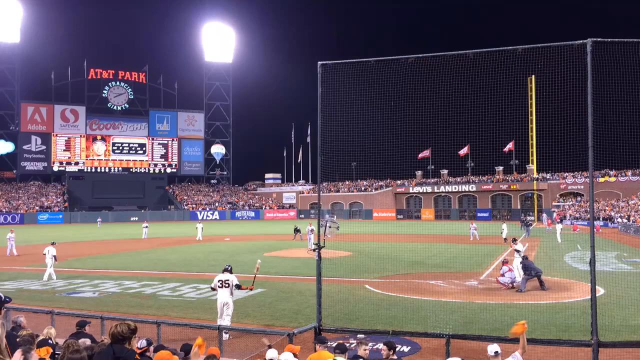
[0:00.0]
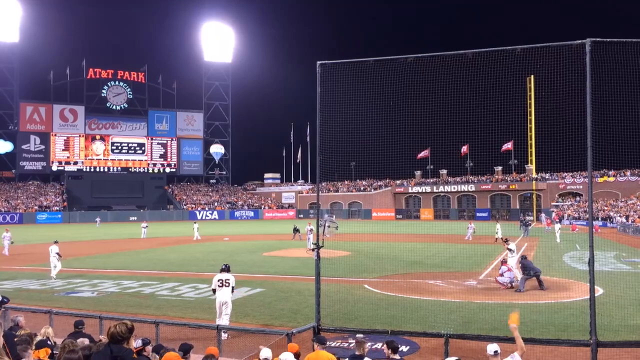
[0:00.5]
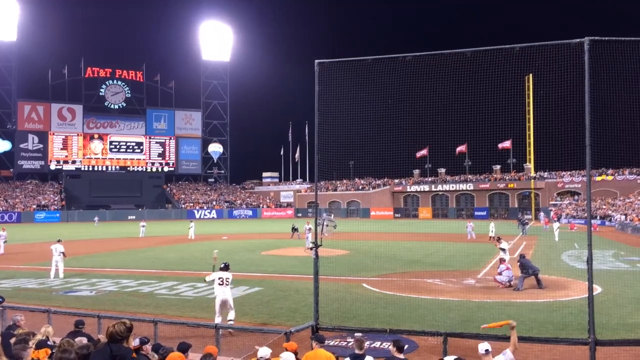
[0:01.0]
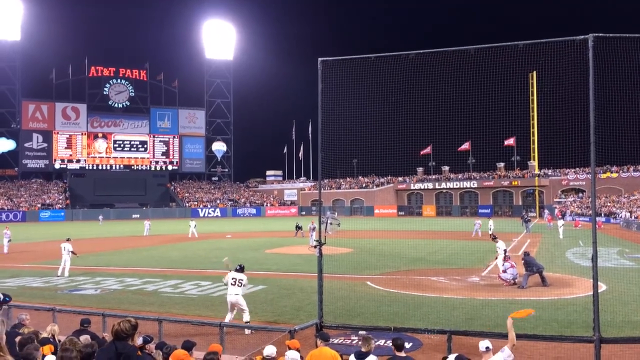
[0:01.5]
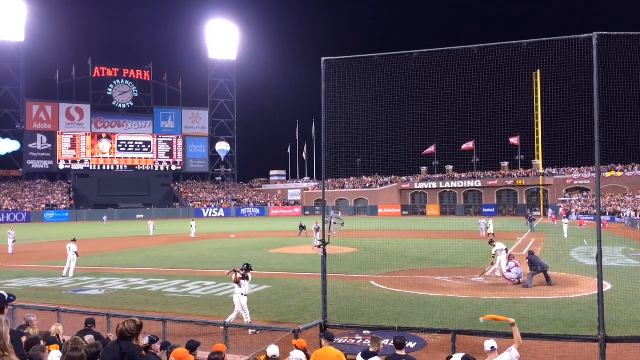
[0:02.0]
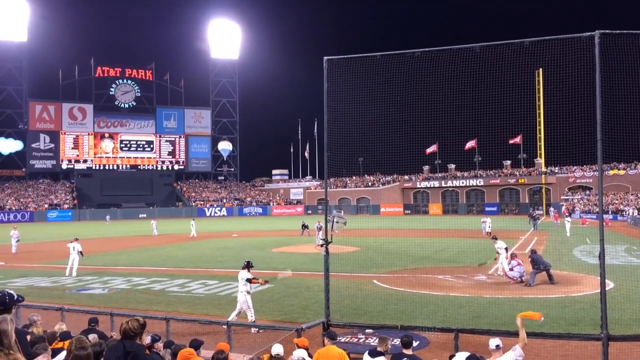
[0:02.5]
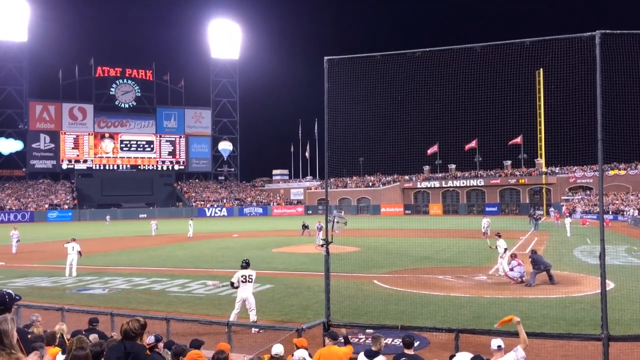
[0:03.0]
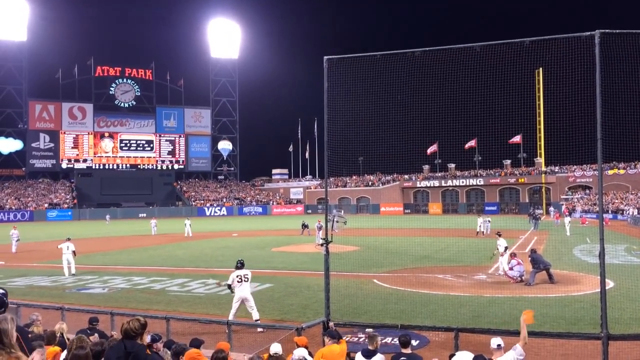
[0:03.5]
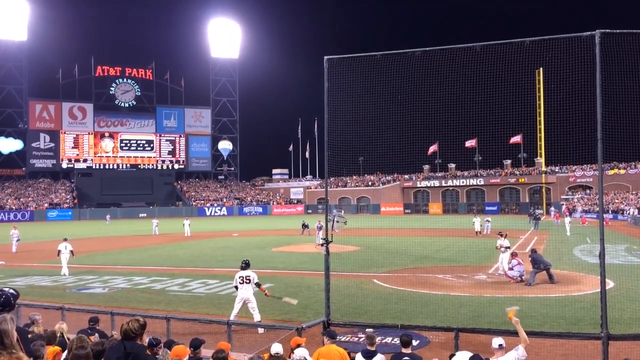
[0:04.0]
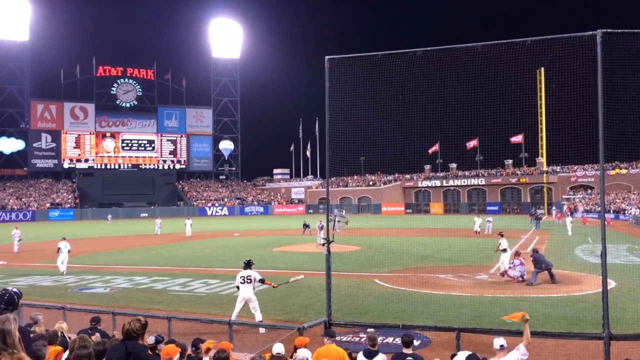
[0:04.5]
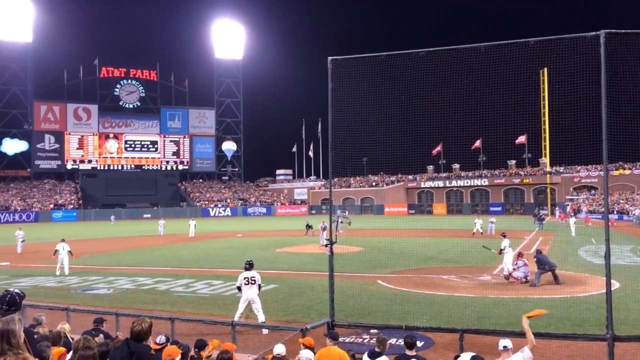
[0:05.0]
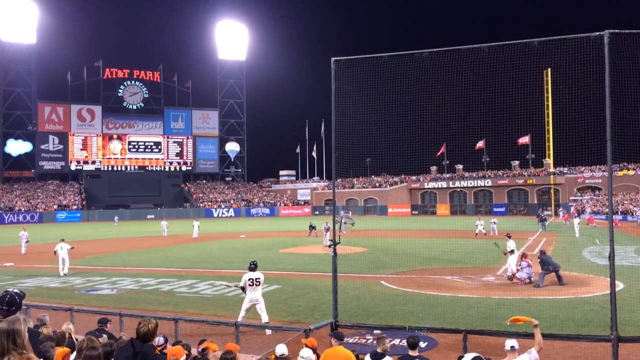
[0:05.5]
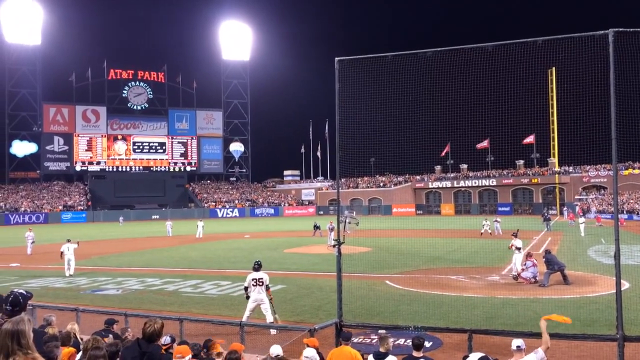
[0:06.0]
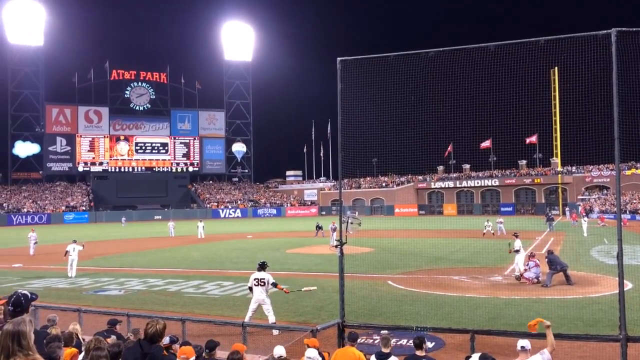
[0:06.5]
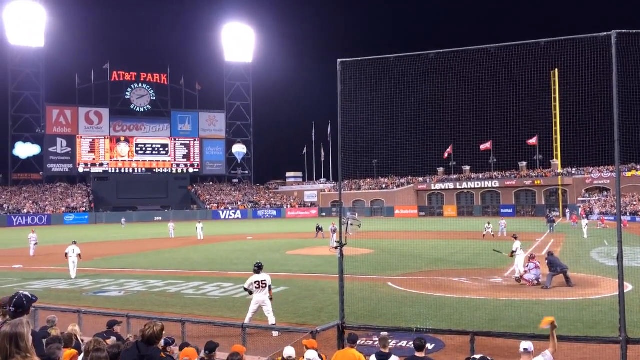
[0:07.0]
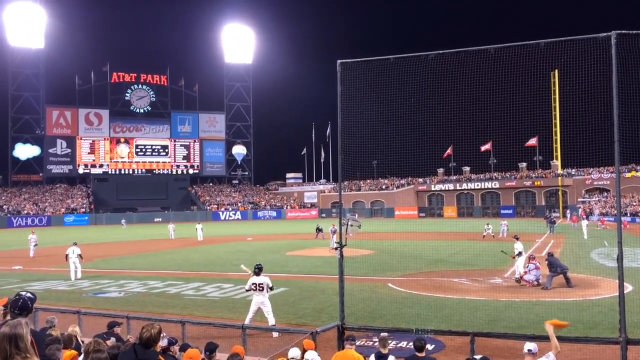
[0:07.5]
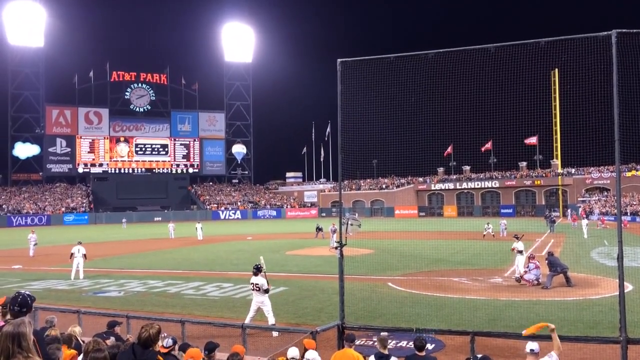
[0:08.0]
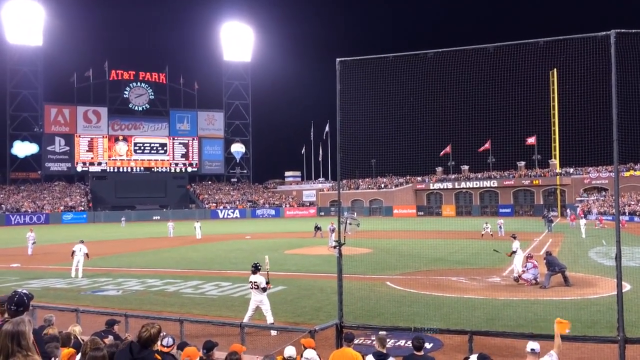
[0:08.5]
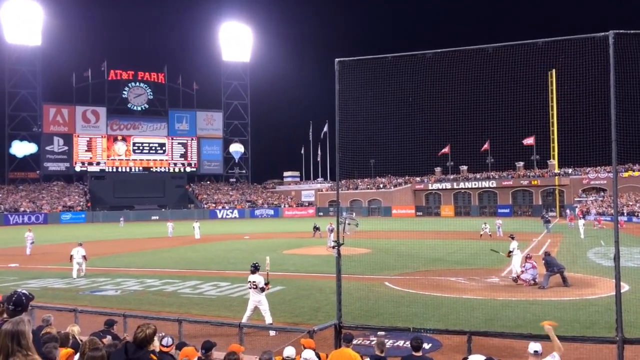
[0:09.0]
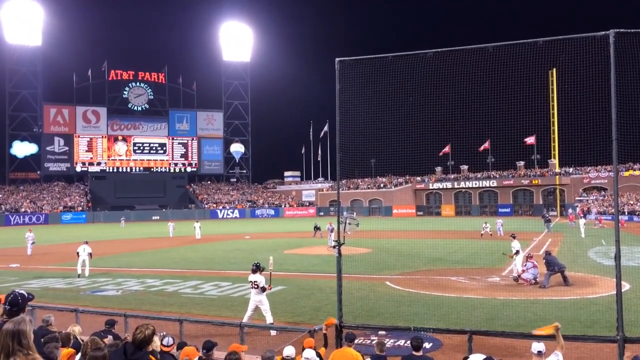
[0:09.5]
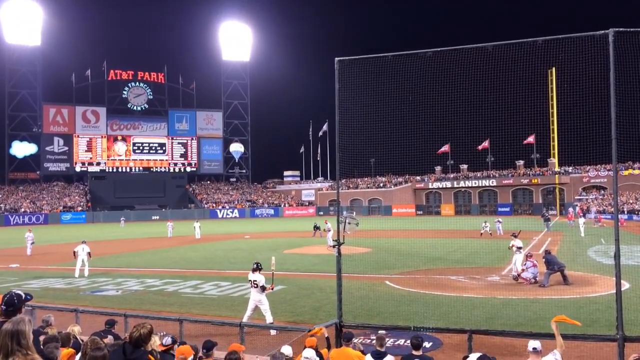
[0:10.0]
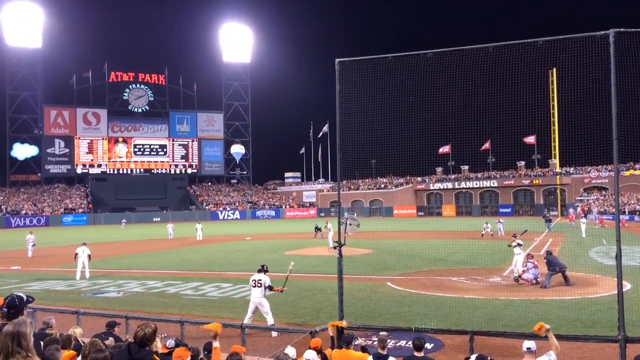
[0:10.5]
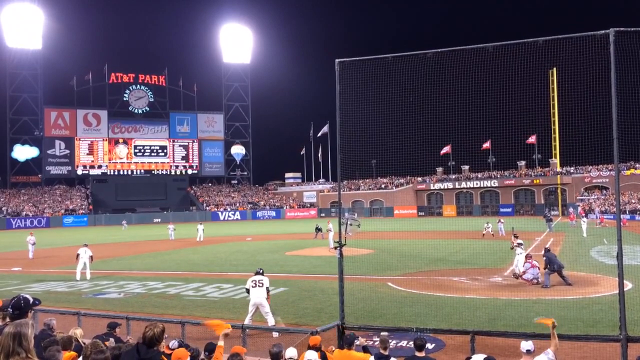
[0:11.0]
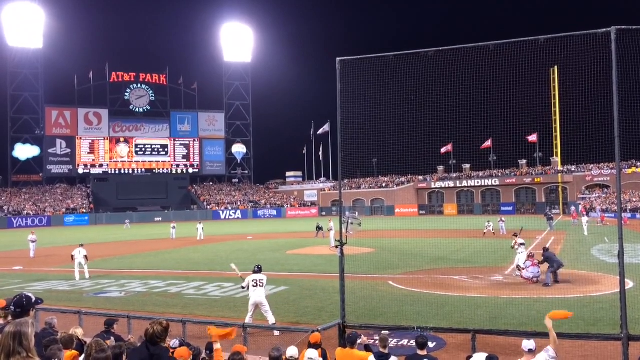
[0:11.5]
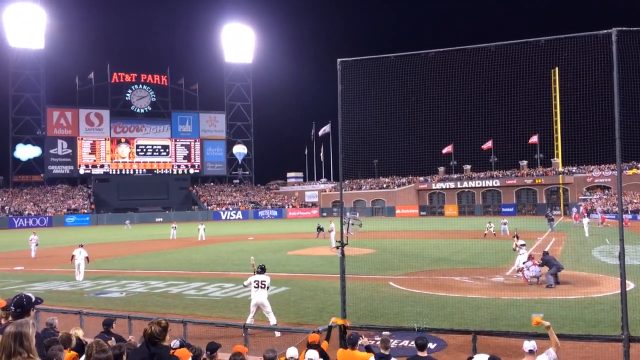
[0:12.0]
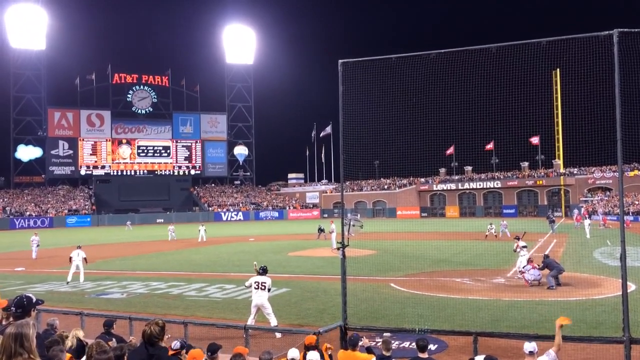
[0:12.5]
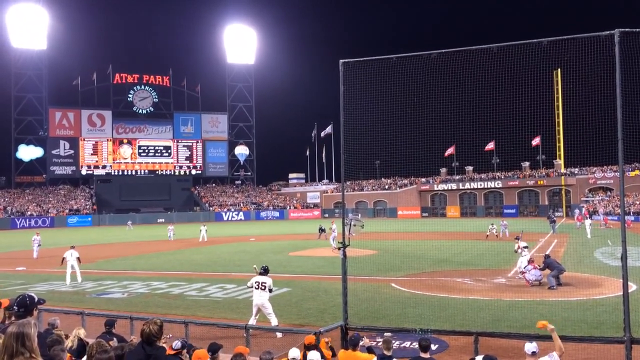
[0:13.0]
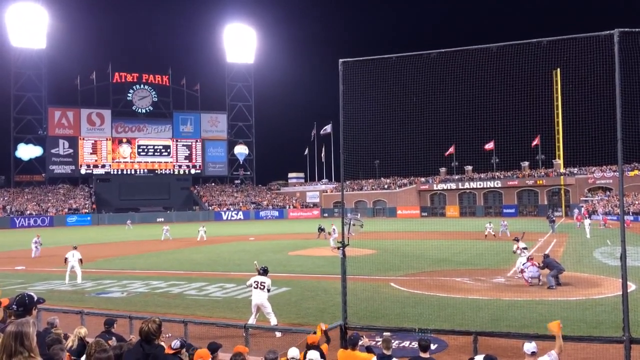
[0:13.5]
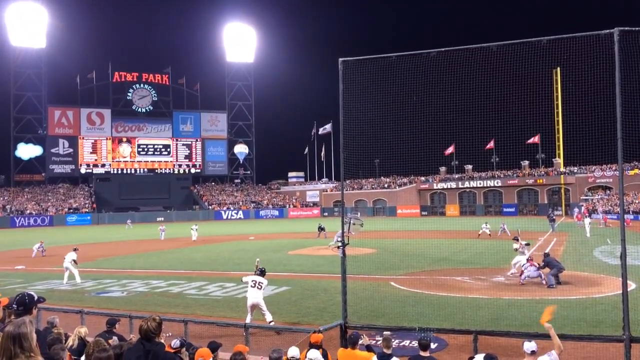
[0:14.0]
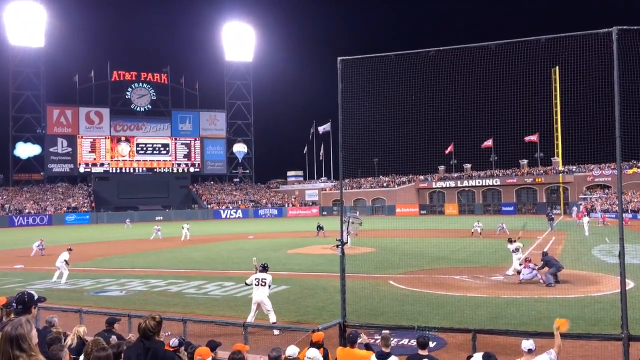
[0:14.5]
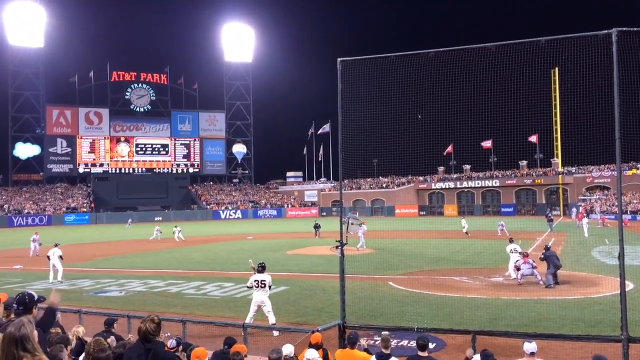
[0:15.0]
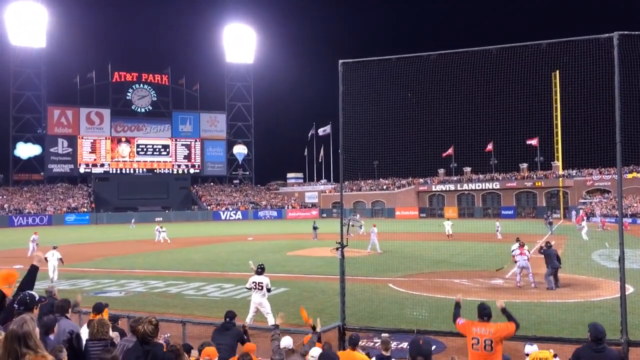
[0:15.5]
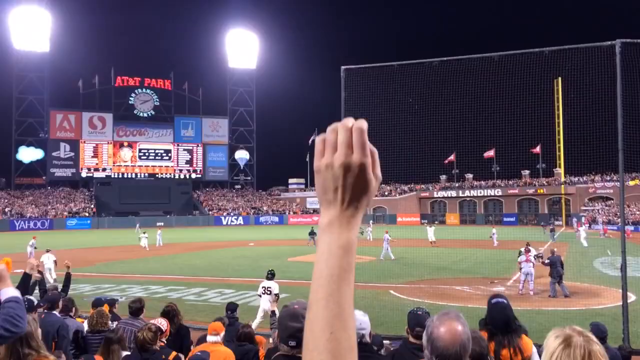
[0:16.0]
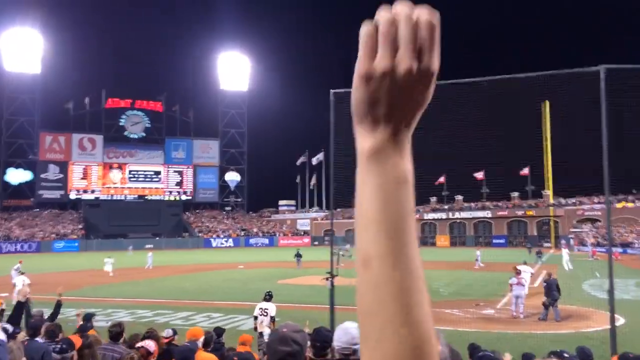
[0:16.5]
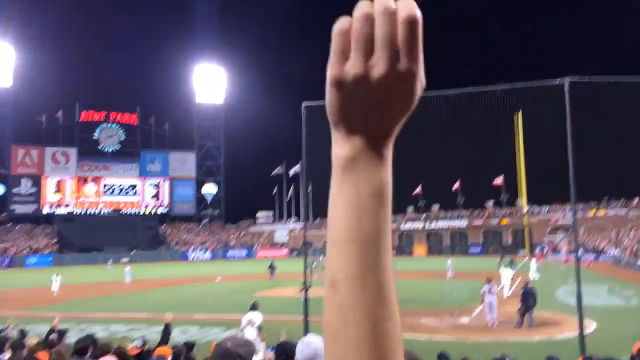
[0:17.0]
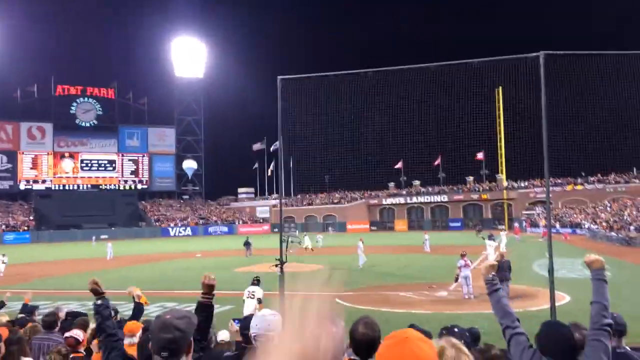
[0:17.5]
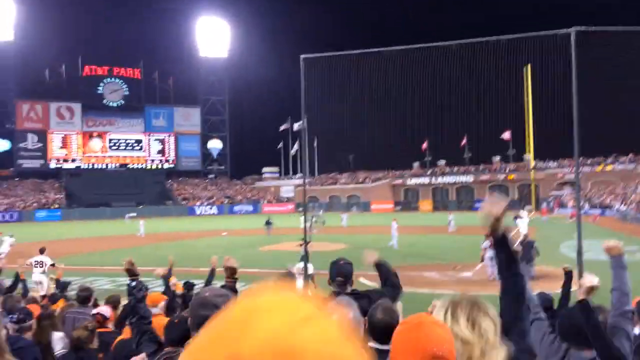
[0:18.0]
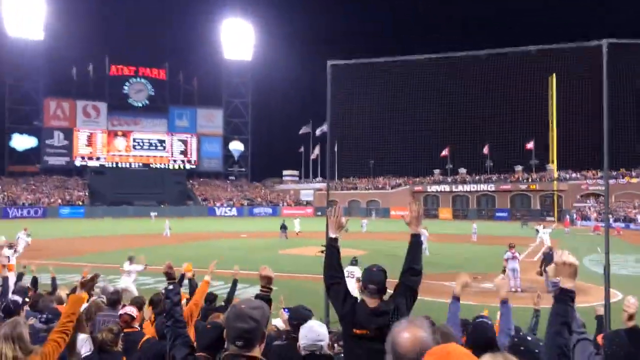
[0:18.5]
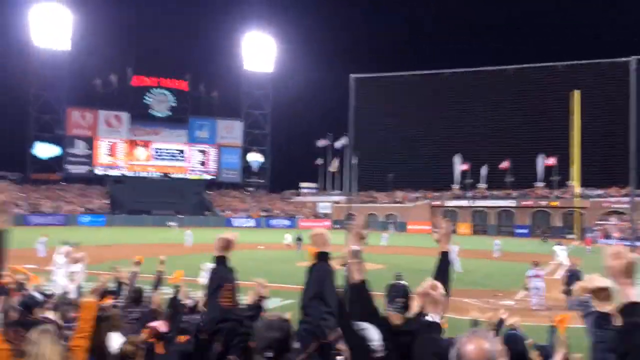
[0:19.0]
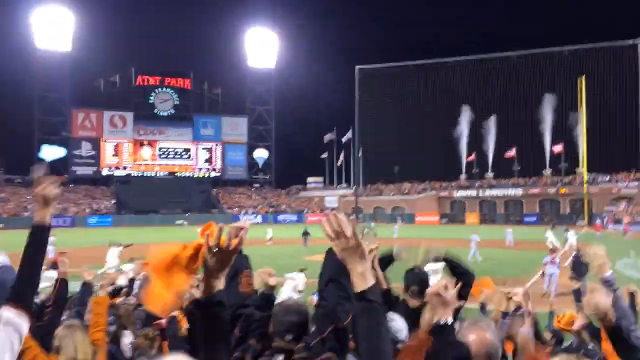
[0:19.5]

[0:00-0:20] At a baseball game, one person stands to the side at home base preparing to swing, with the catcher behind him and an umpire in the back. Toward the middle at the bottom of the screen, another player is swinging a bat, apparently possibly practicing his swing. Someone throws the ball, and the batter hits it and runs to first base; the shot cuts off while he is running to second base. Something like steam or smoke comes up when he hits the ball and starts to run. The game appears very crowded, with a lot of fans. The game is at AT&T Park, which has a Levi's Landing section. The fans start to cheer once he gets to second base. The team's colors might be blue and orange.